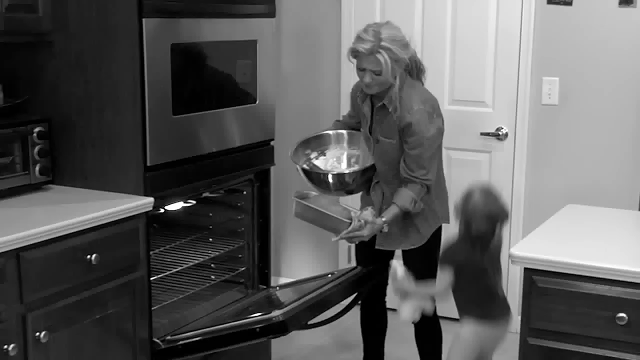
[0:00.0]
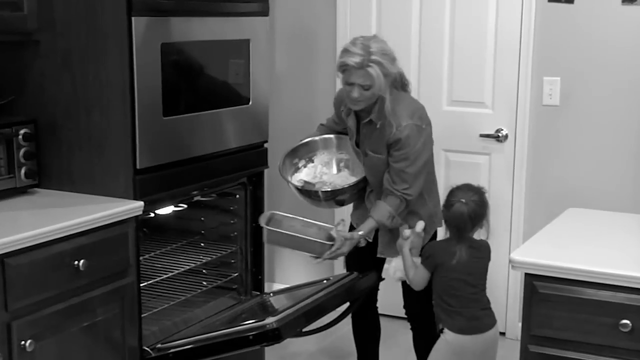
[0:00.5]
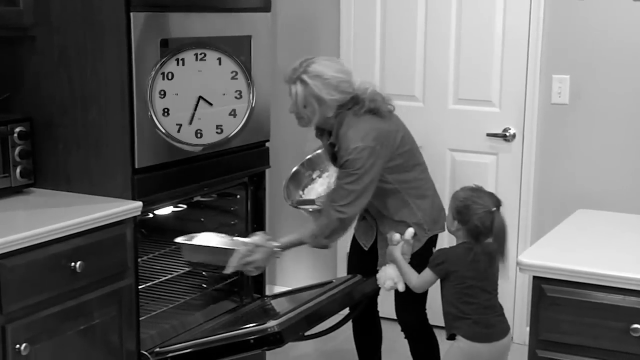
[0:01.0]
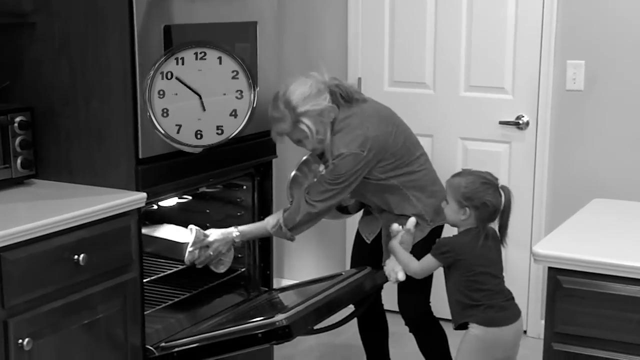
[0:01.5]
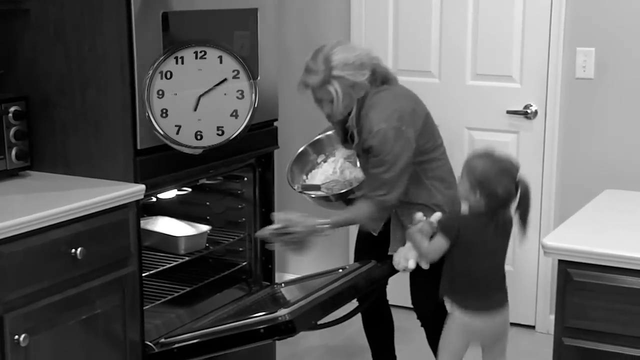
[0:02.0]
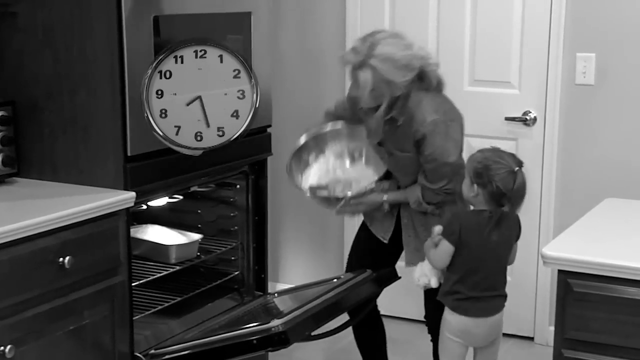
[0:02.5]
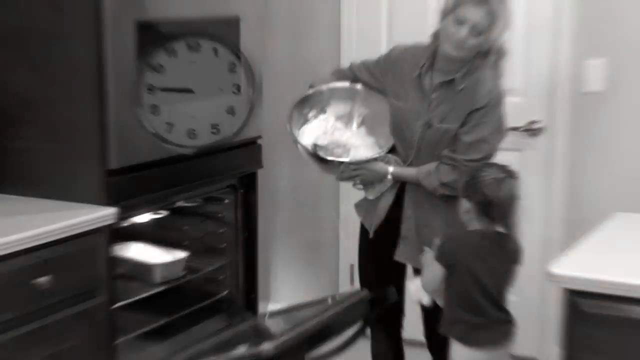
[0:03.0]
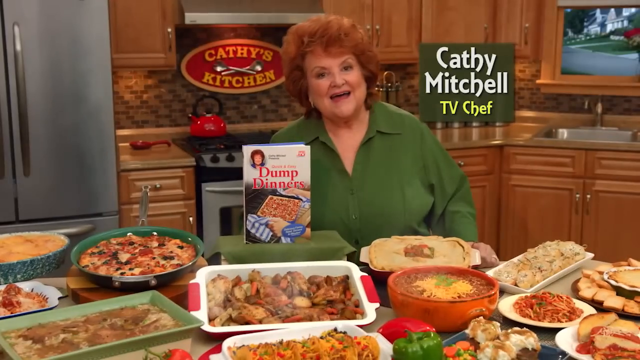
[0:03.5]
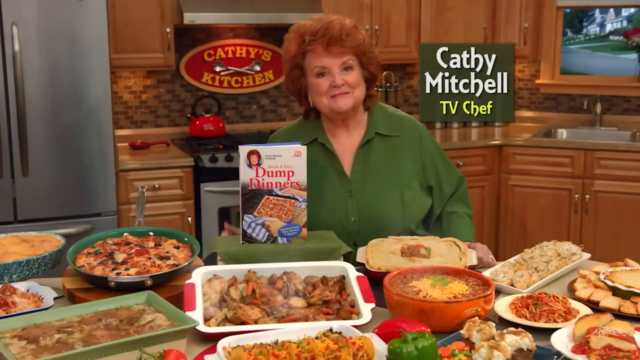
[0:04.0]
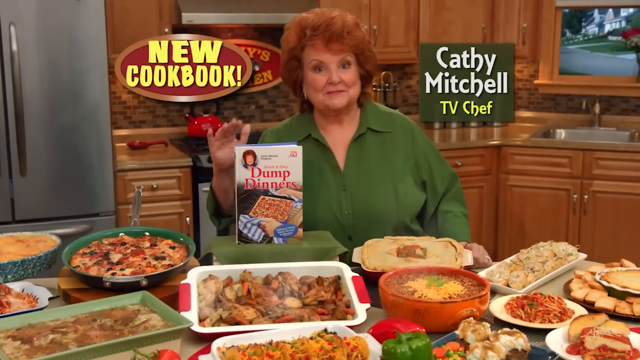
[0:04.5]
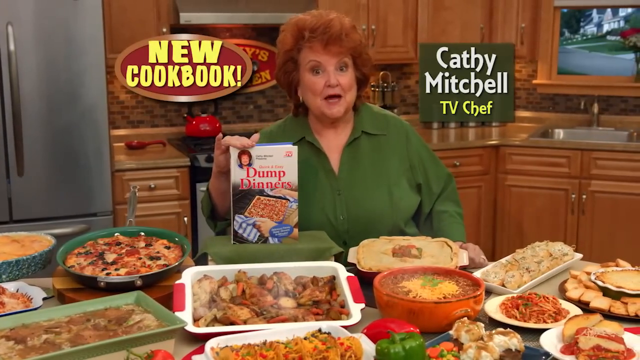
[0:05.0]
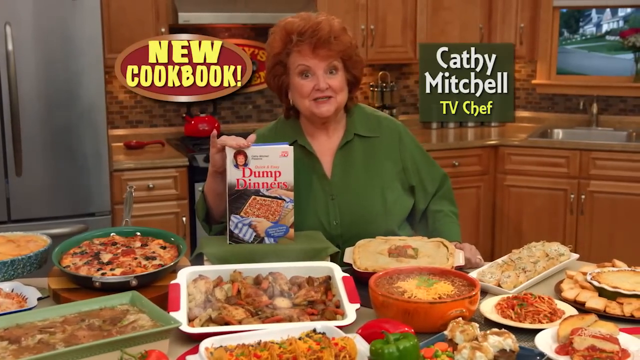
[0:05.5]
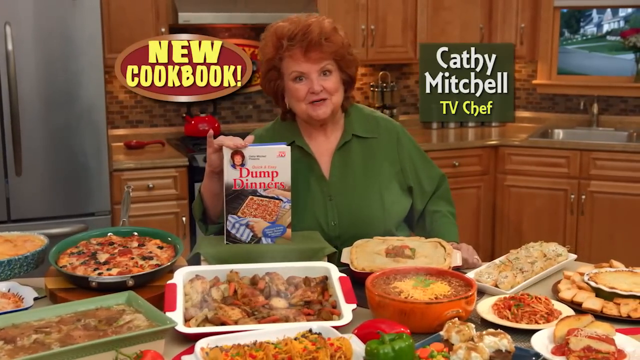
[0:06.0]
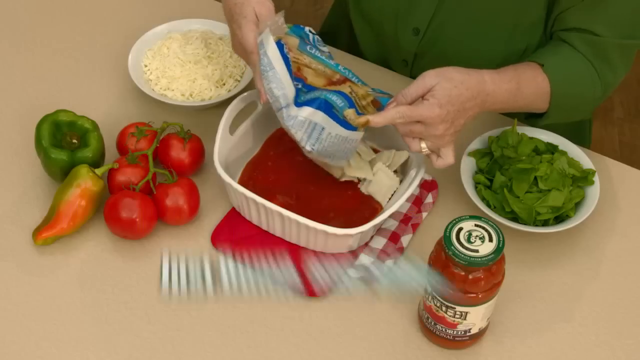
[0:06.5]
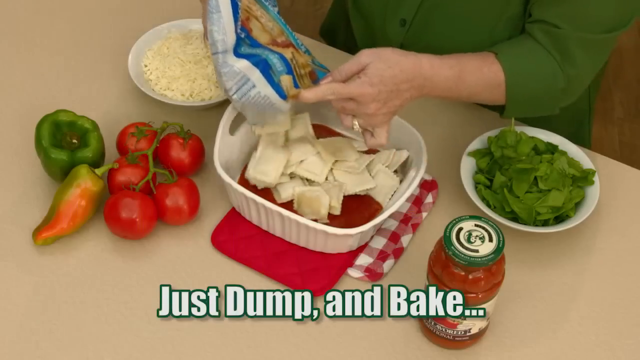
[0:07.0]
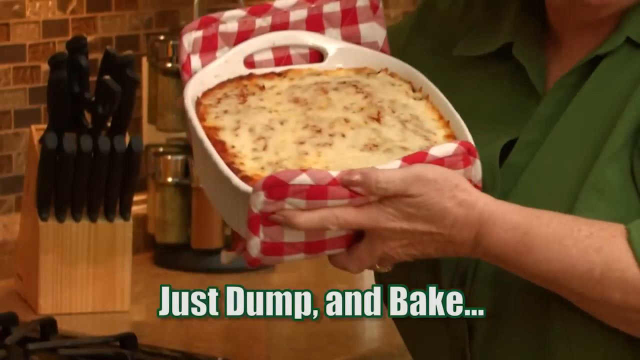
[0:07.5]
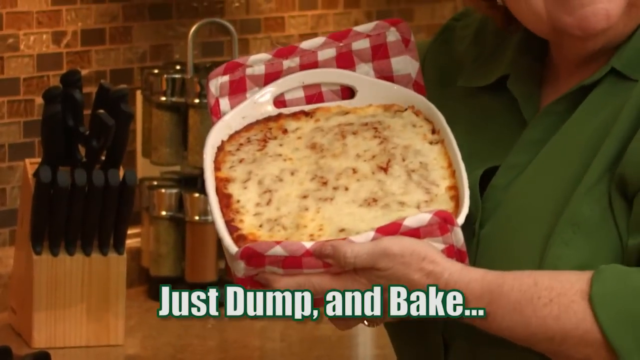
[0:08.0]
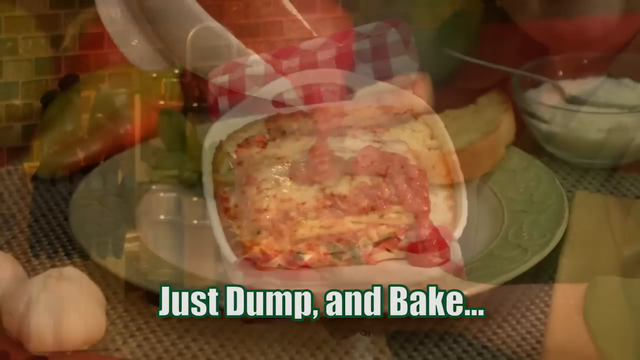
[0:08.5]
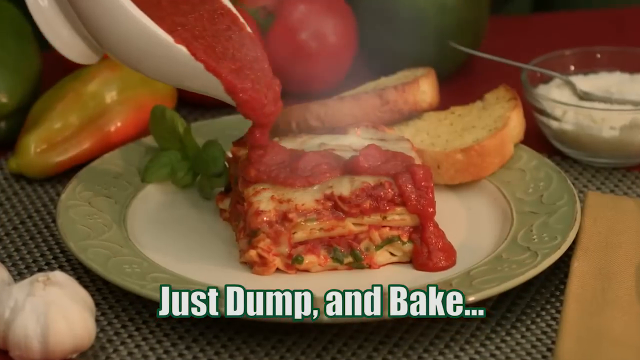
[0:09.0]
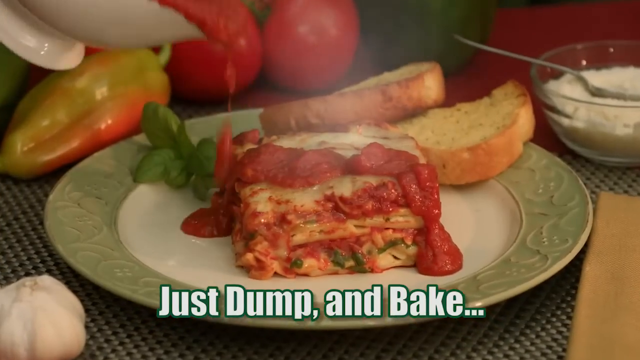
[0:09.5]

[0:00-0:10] A blonde woman puts some type of dish into the oven while a child grabs her around the waist; in her left hand she holds another bowl against her chest. When she puts the item in the oven, a clock appears. The video then transitions to an older woman with red hair. Behind her, text reads "Kathy's Kitchen", and right next to her is a book that says "Dump Diners". The woman's name appears to be Kathy Mitchell, and she seems to be a TV chef.